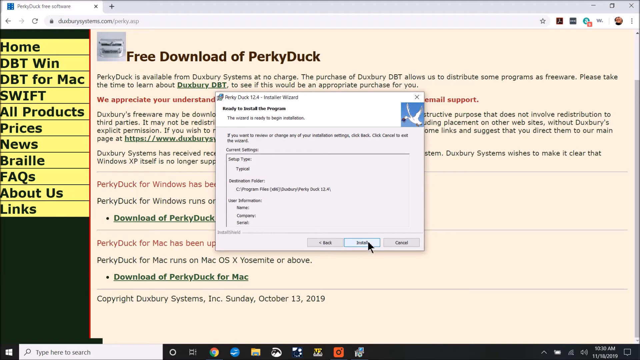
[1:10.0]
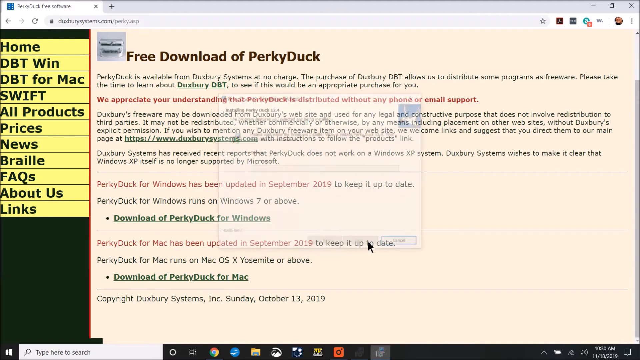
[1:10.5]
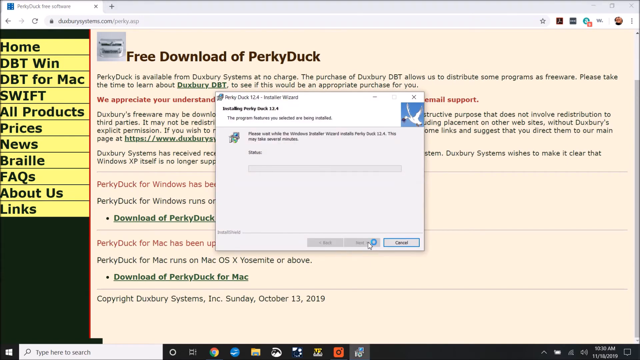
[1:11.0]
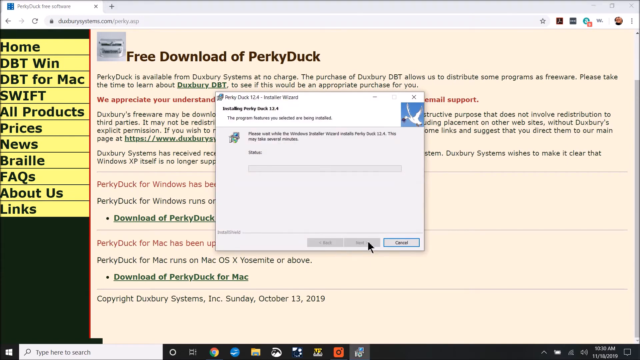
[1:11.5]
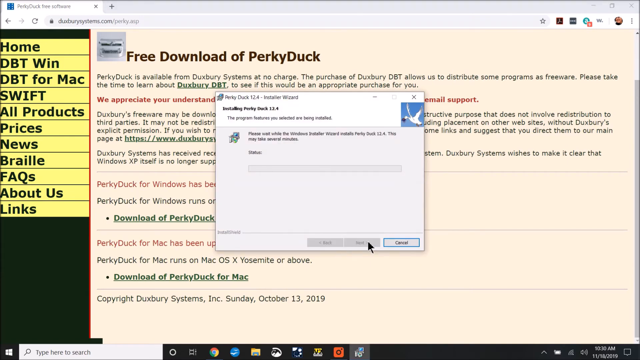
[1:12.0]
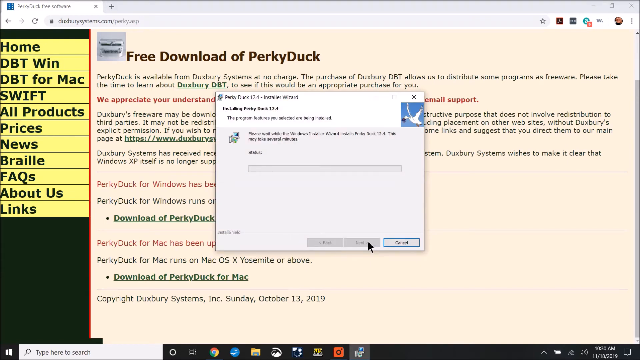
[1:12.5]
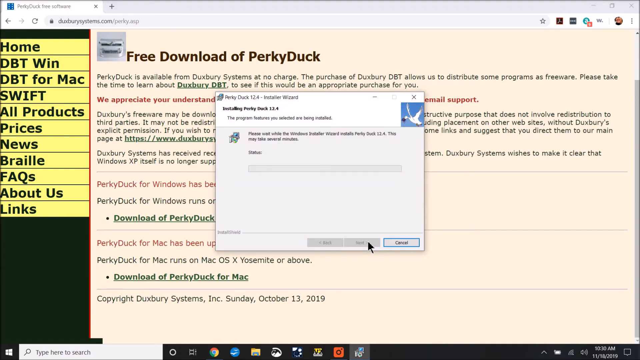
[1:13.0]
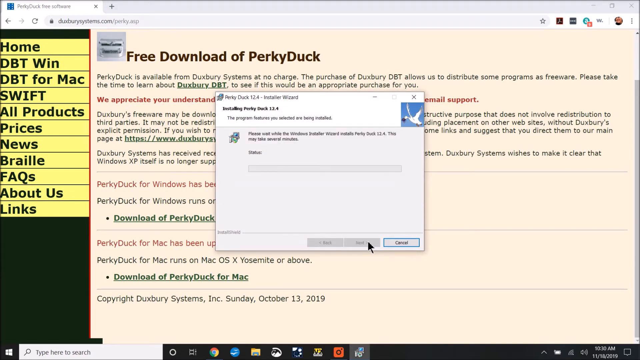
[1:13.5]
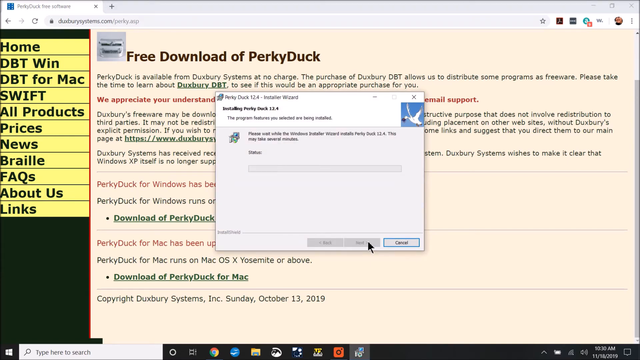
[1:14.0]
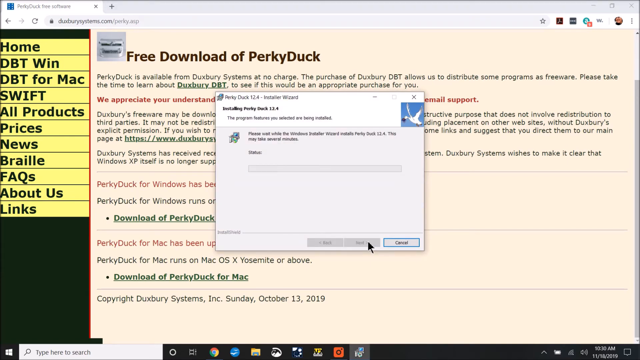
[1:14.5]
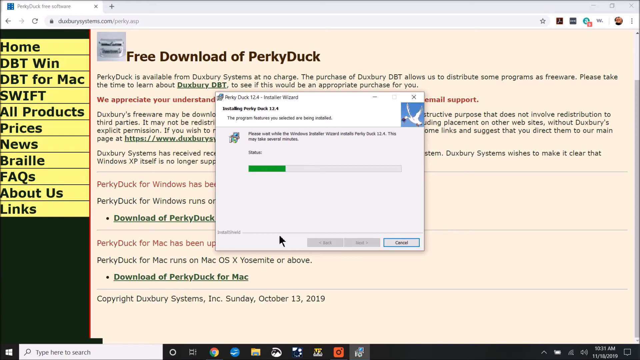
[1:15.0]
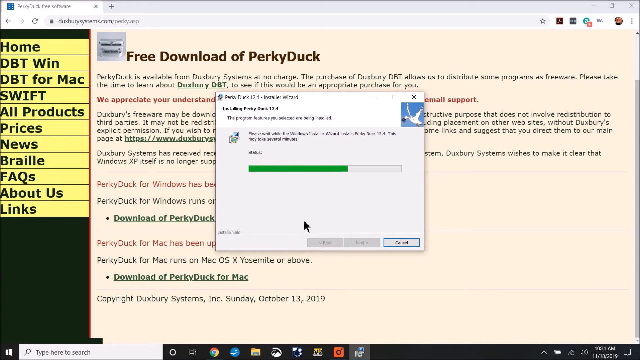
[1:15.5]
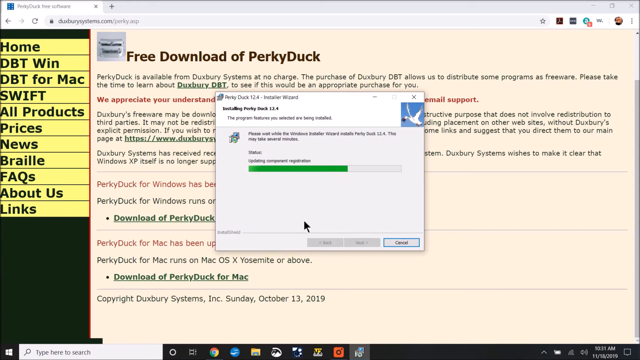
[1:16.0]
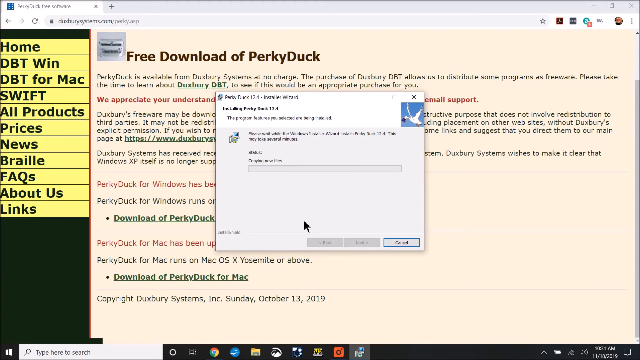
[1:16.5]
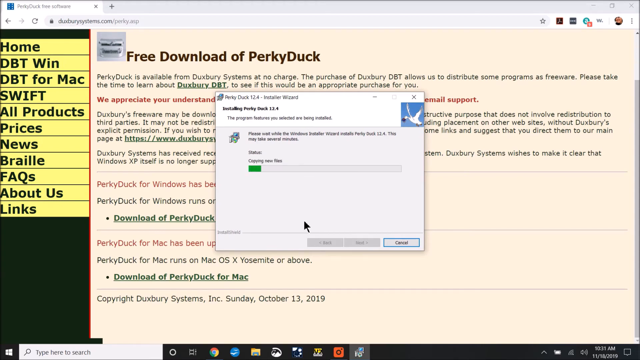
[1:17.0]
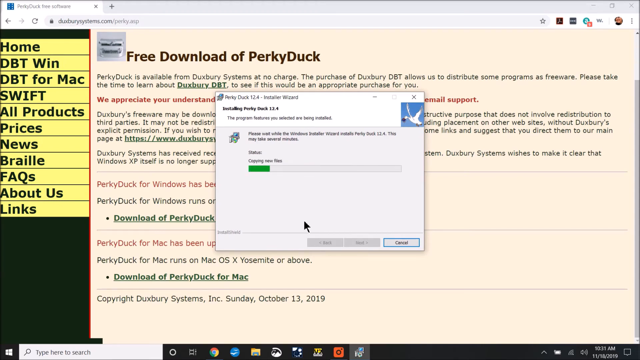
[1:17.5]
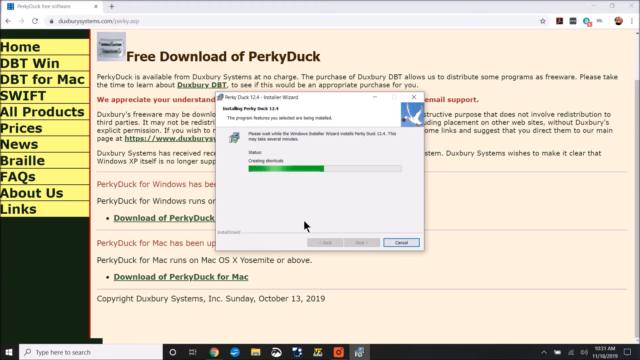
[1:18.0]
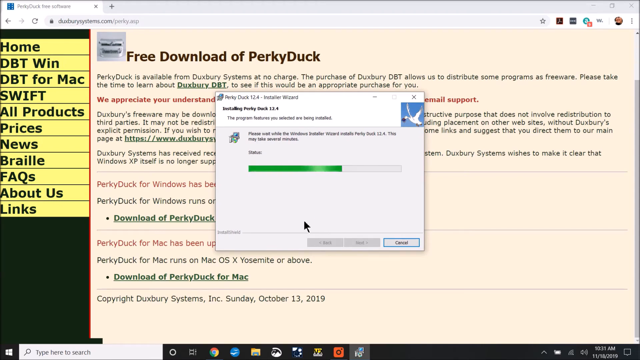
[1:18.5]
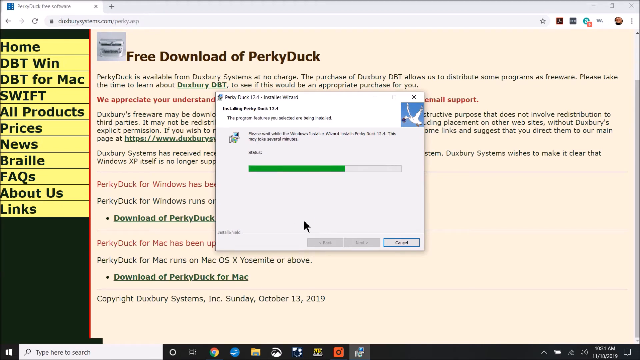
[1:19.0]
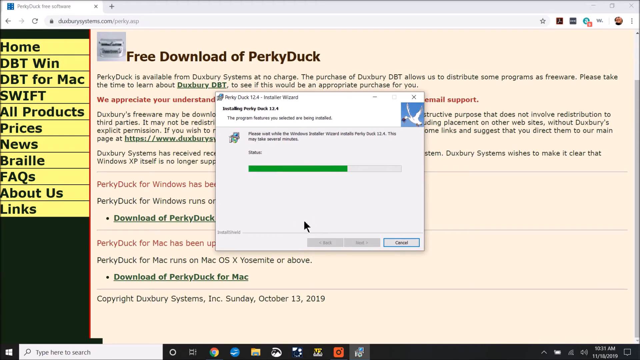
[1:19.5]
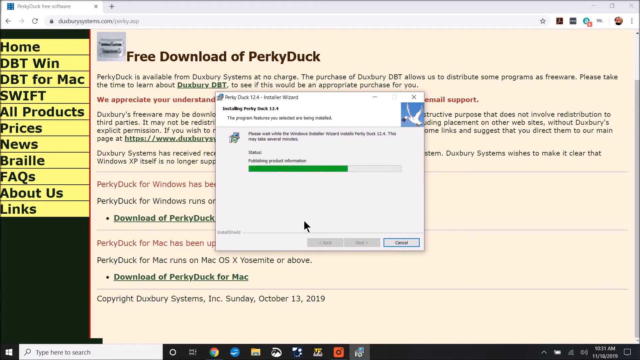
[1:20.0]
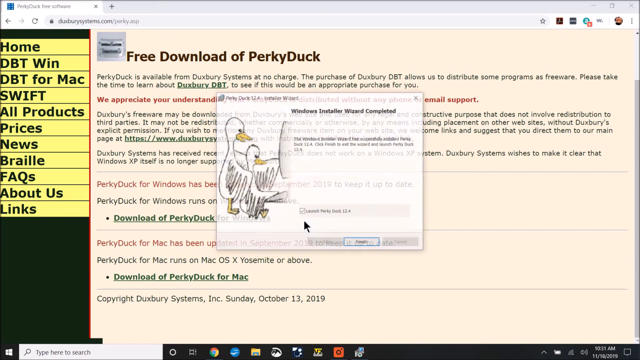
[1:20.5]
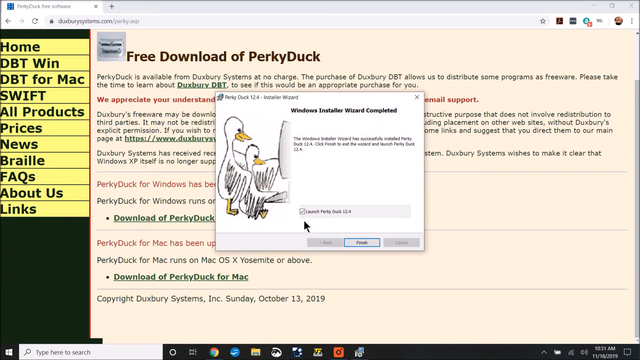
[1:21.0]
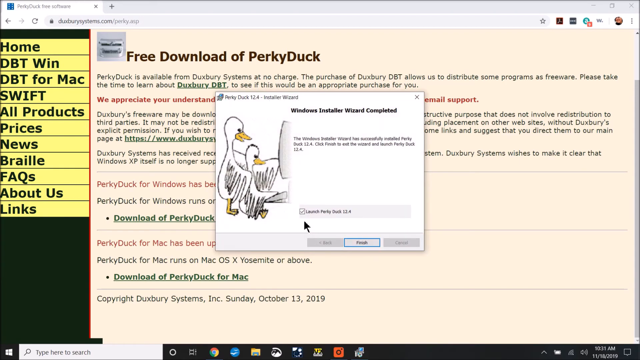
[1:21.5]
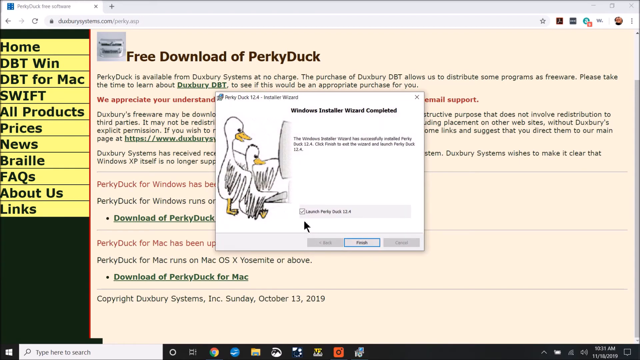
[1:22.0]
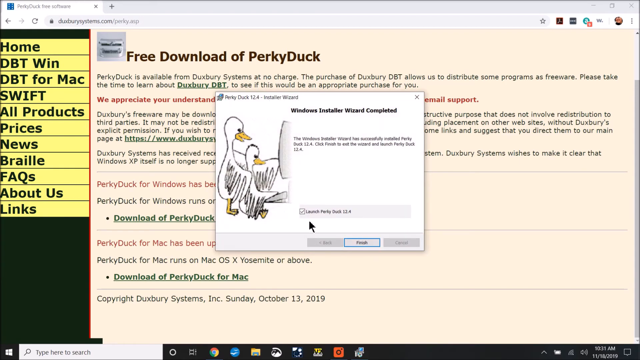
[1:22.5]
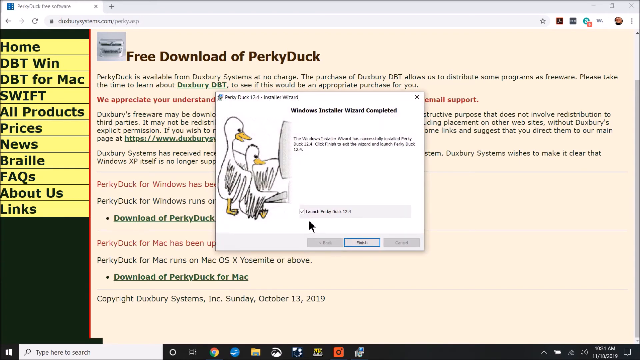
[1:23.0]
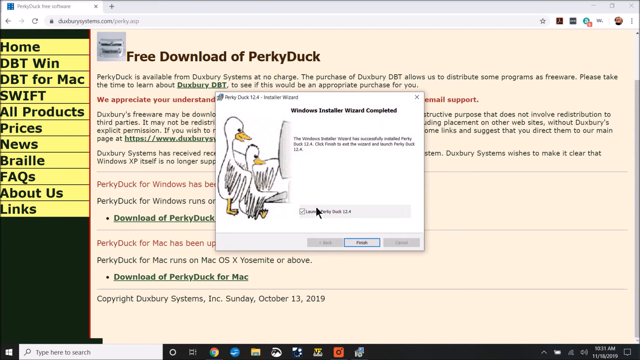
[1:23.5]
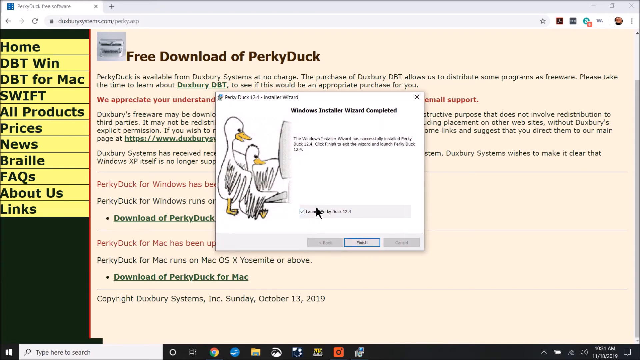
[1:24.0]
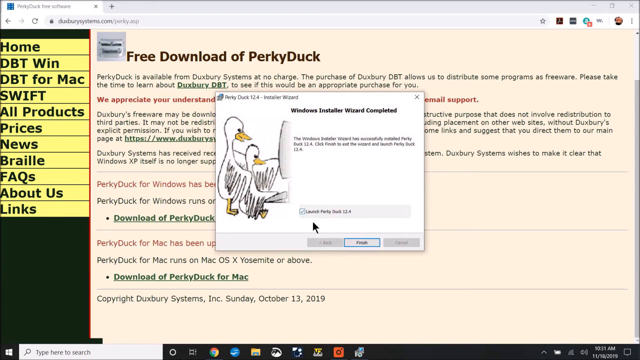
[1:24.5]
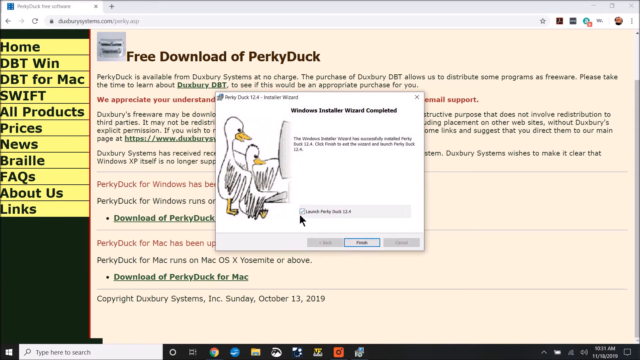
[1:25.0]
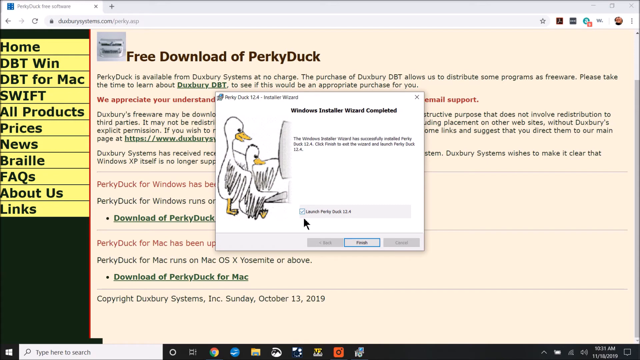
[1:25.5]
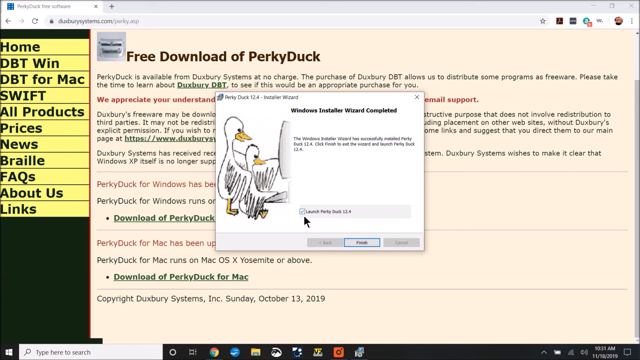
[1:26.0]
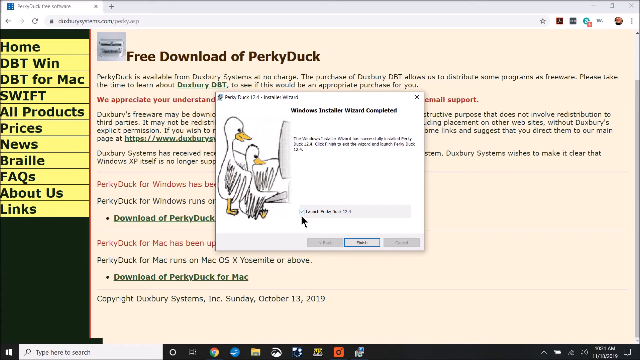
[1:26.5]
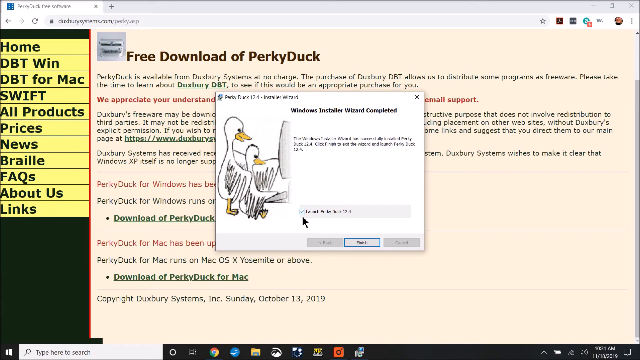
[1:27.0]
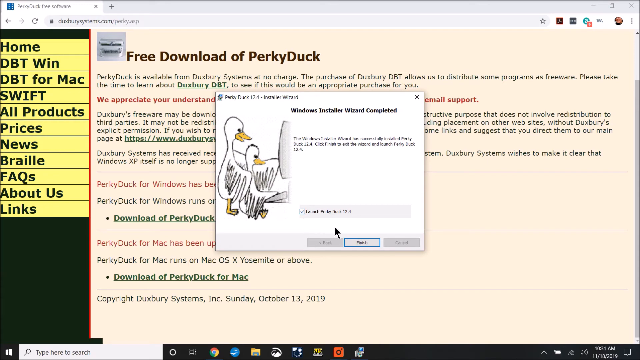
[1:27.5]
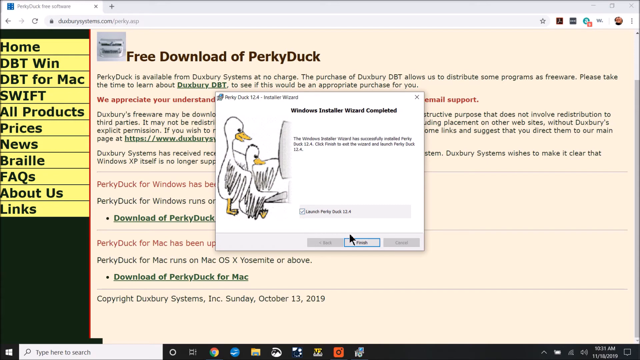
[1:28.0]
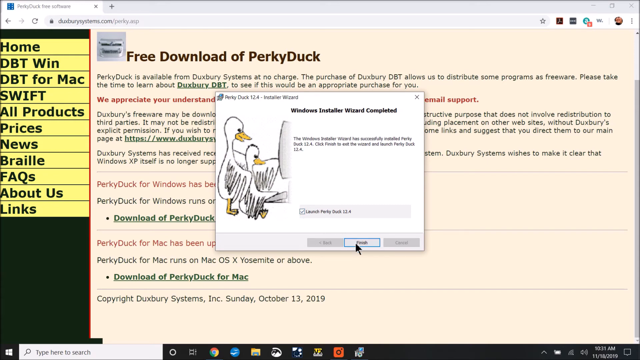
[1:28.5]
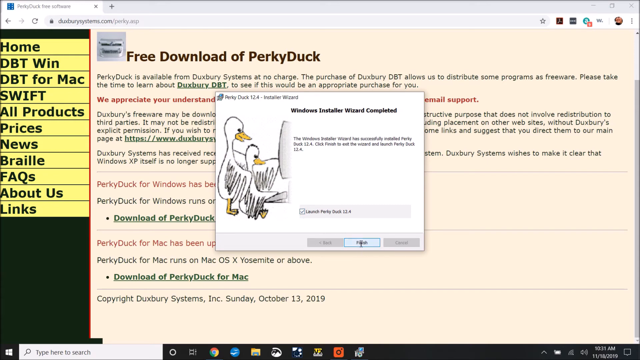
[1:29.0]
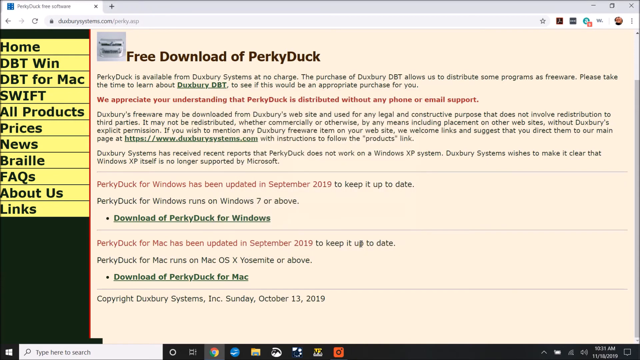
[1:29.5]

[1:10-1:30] After Next is clicked, a final summary page shows where the folder is going to be. The user clicks Install, and the page changes to show the installation in progress, with text reading "The program features you selected are being installed" and "please wait". A status bar that is blank at first fills about three-fourths of the way with green almost instantly. The installer copies new files, quickly finishes and moves on to other steps such as creating shortcuts, with the green bar reaching about three-fourths of the way before it finishes. When the installation is complete, a new pop-up appears that says "Windows Installer Wizard completed", with an option to launch Perky Duck 12.4 and a checkbox to its left that is checked by default. The user hovers over the checkbox but does not click it, and then clicks Finish.